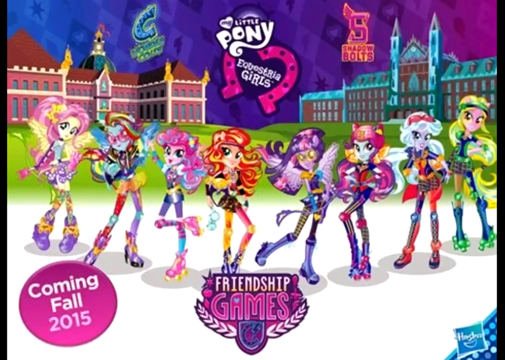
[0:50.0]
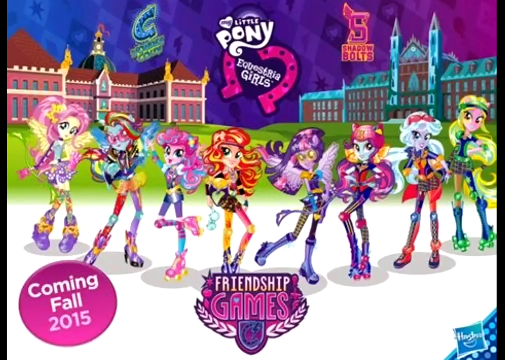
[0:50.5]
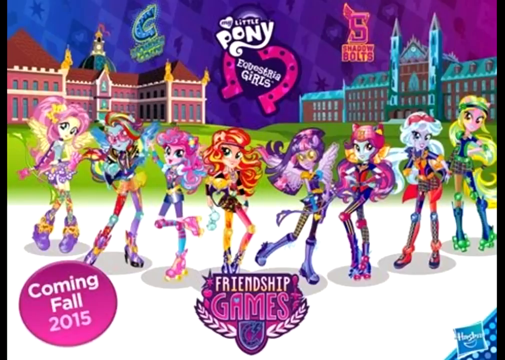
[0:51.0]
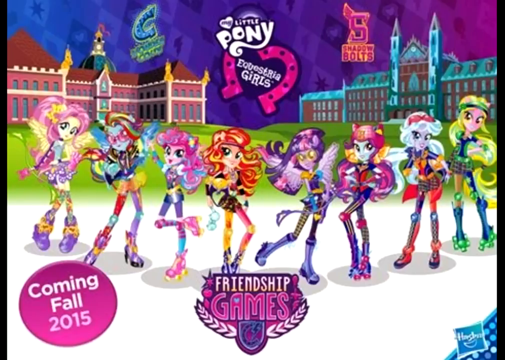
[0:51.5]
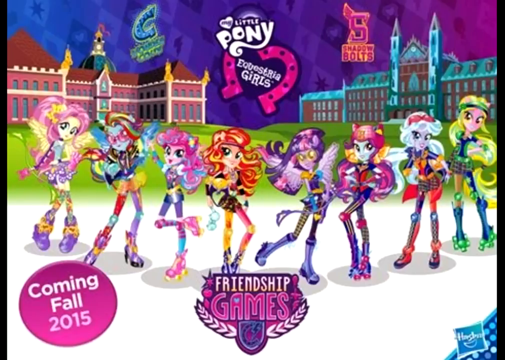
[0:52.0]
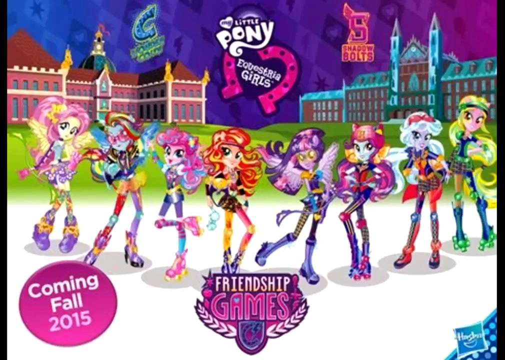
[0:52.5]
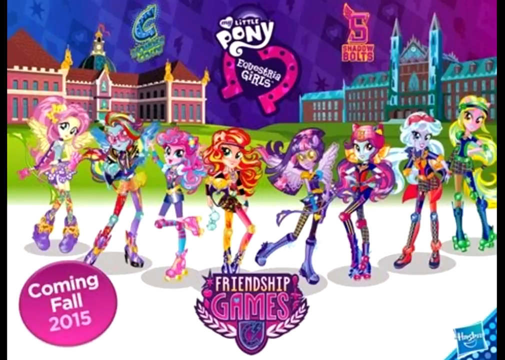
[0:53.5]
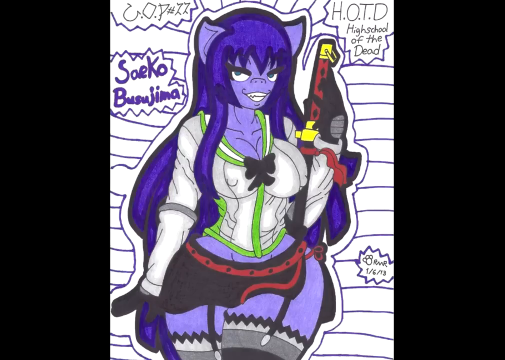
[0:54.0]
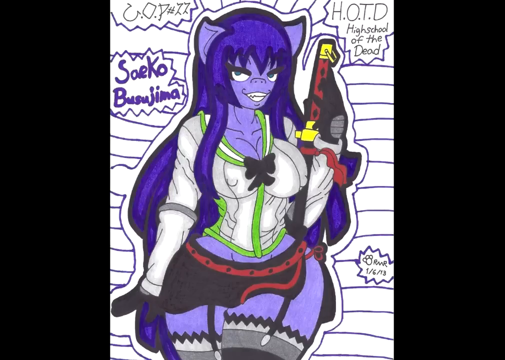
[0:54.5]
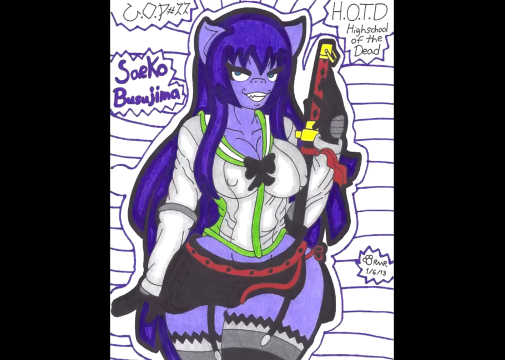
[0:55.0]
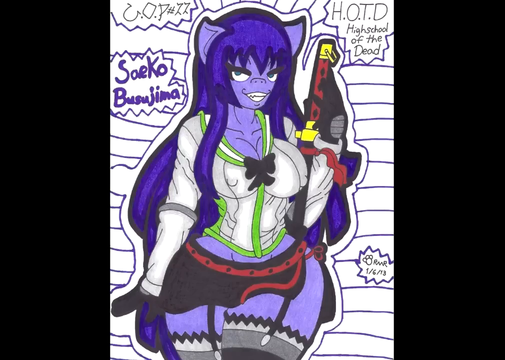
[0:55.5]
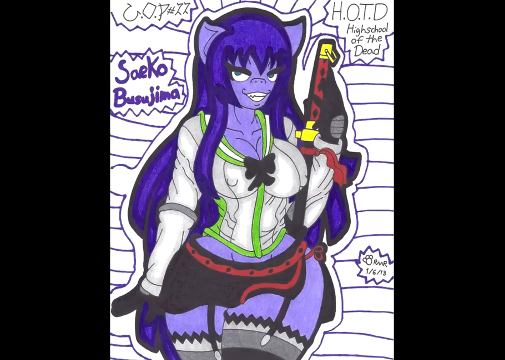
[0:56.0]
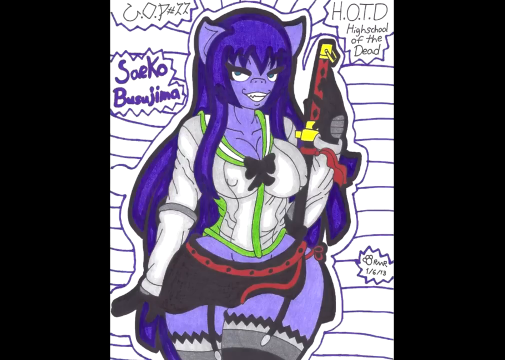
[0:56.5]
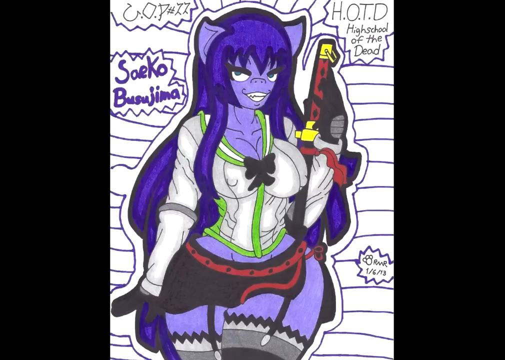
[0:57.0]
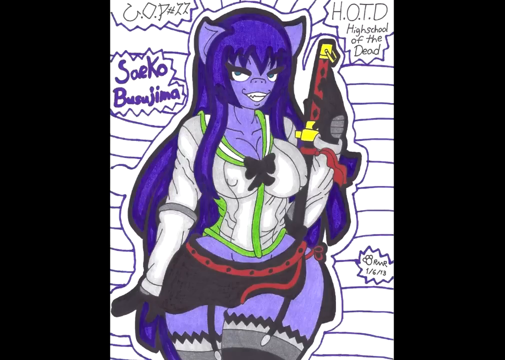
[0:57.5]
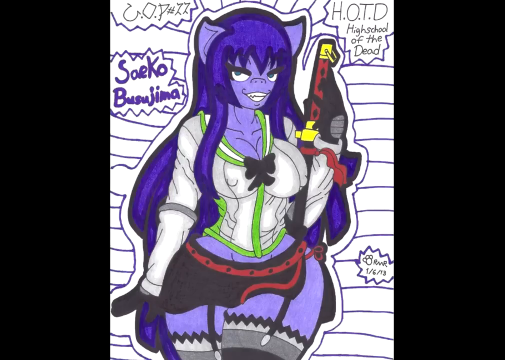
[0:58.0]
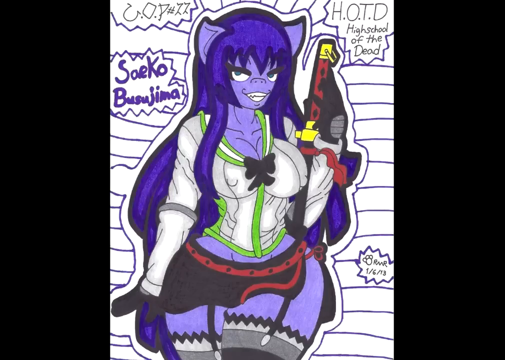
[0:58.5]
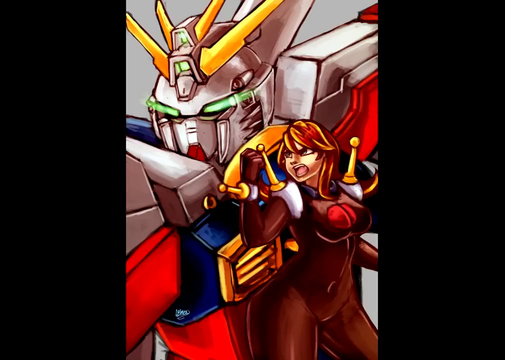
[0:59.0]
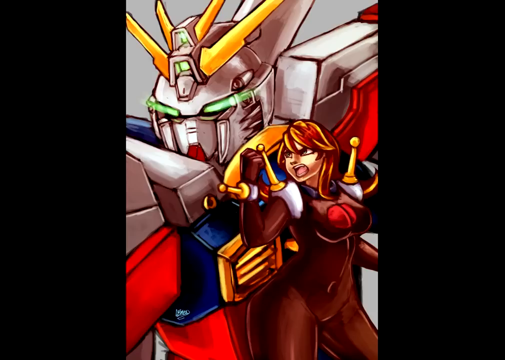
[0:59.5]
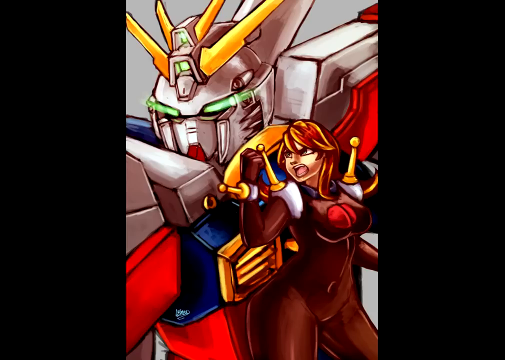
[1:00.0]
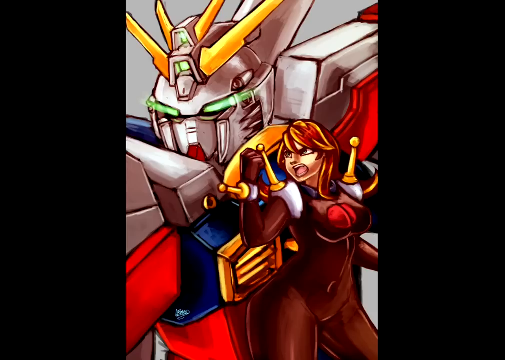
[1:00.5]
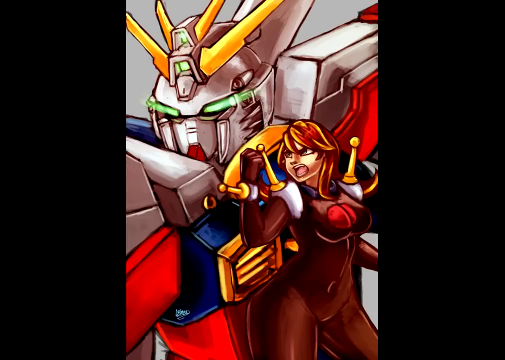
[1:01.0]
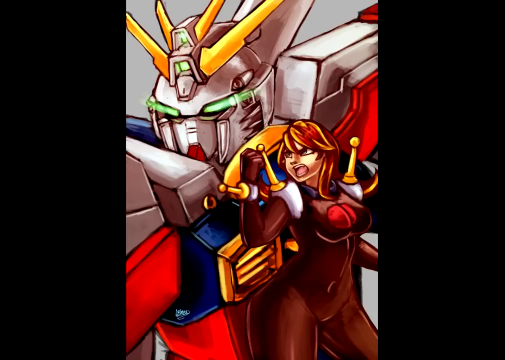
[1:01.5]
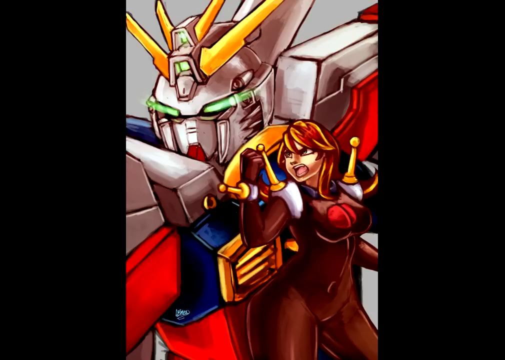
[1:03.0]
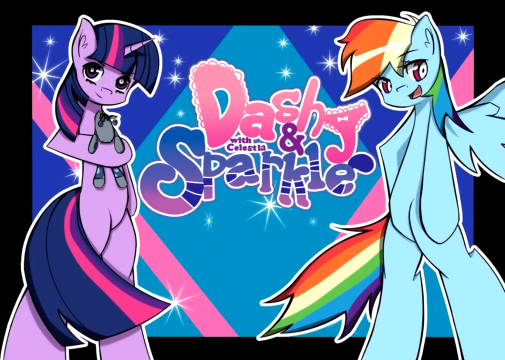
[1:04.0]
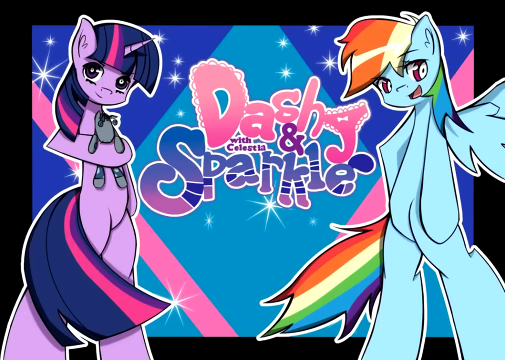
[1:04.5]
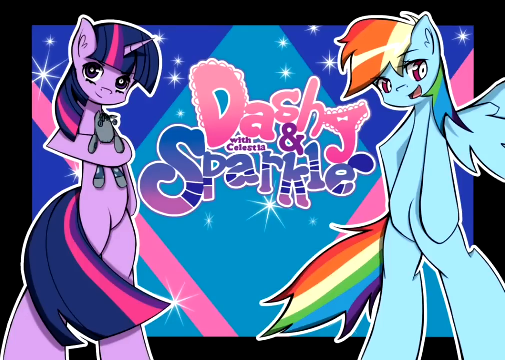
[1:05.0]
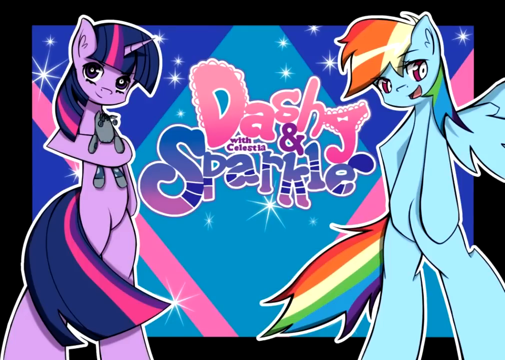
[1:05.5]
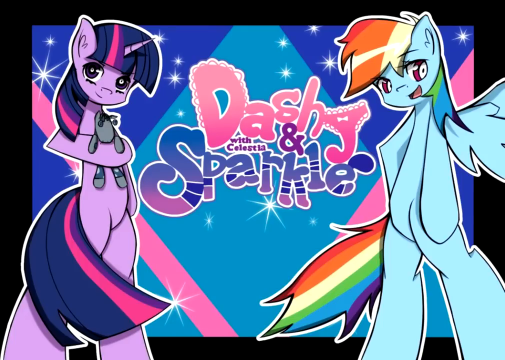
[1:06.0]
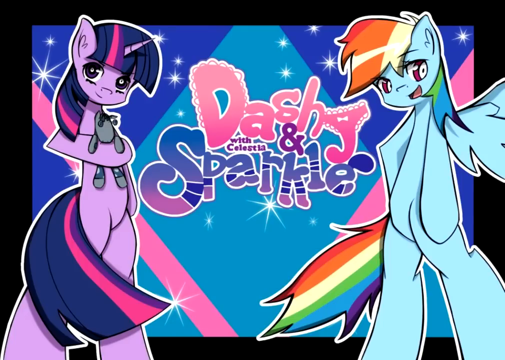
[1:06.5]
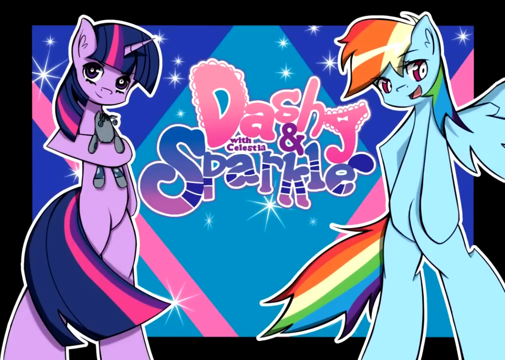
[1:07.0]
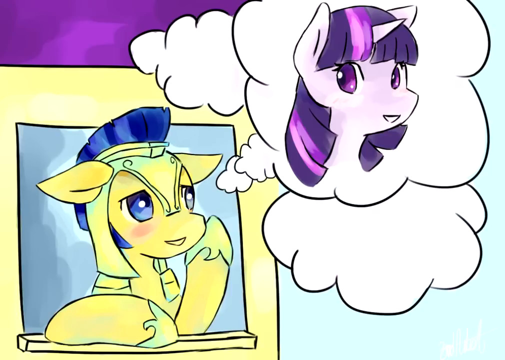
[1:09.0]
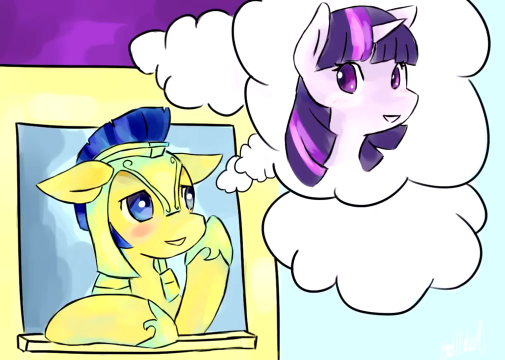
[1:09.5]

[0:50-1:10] An advert for what is either a cartoon or a series of toys says "My Little Pony Equestria Girls" and shows eight sort of humanoid girls with different coloured hair and outfits, all looking very jazzy. Two buildings are behind them, and one has "Shadowbolts" above it. Below, "Friendship Games" appears with a badge, and in the bottom corner "Coming Fall 2015" is on a pink badge. Next is a piece of fan art that says "Sawko Busijima", showing what is apparently a pony with very large breasts, a tiny waist and massive thighs and hips, wearing few clothes, showing a lot of cleavage and with visible nipples. Another piece of fan art looks like it might be Transformers-based, with a lady. Another says "Dashie and Sparkle with Celestia", and another shows a little yellow horse wearing a helmet, looking out of a window and dreaming of another horse in a little thought bubble.